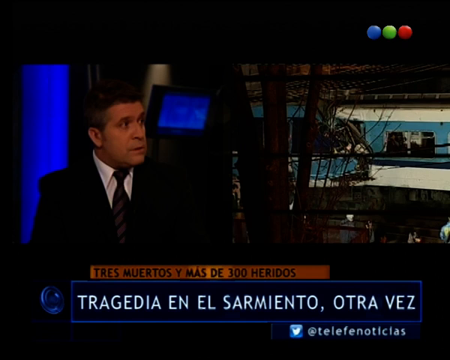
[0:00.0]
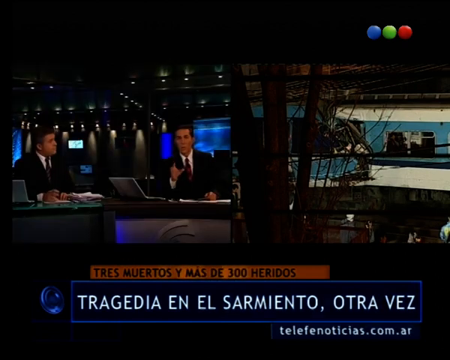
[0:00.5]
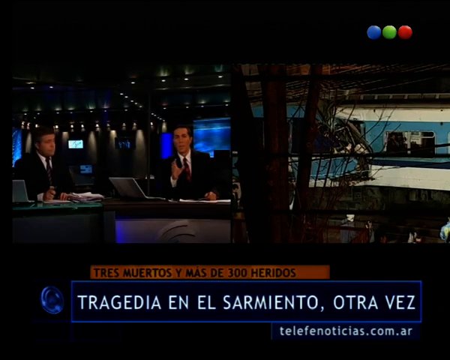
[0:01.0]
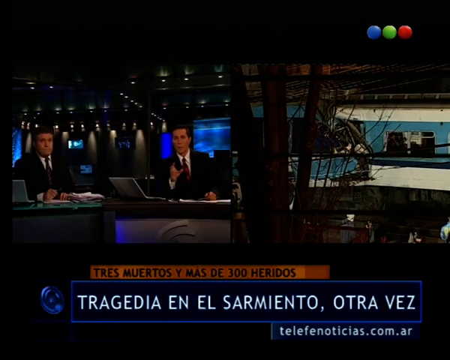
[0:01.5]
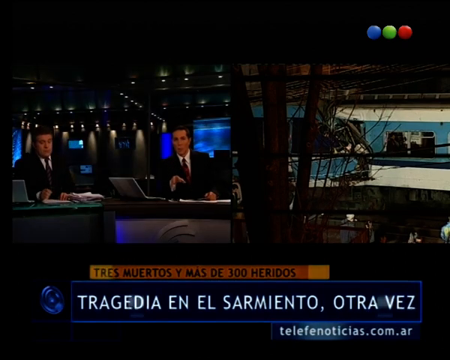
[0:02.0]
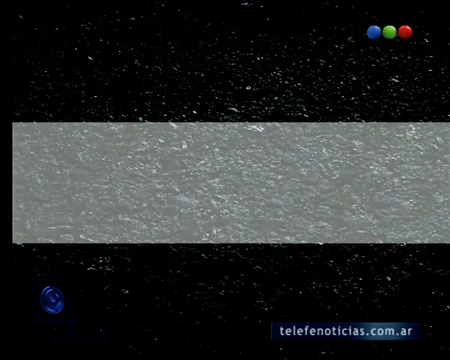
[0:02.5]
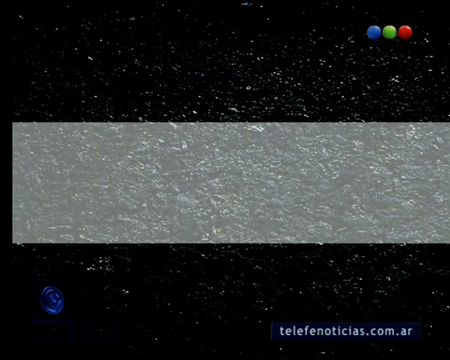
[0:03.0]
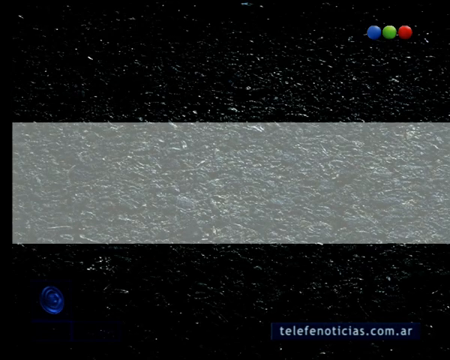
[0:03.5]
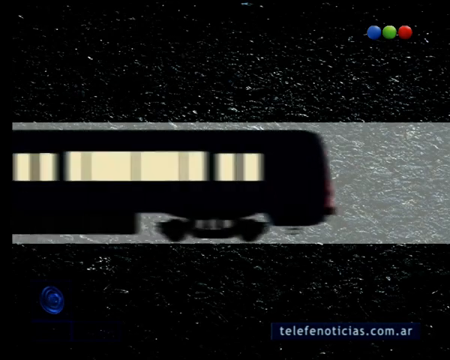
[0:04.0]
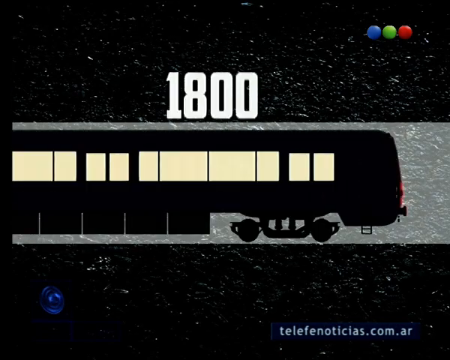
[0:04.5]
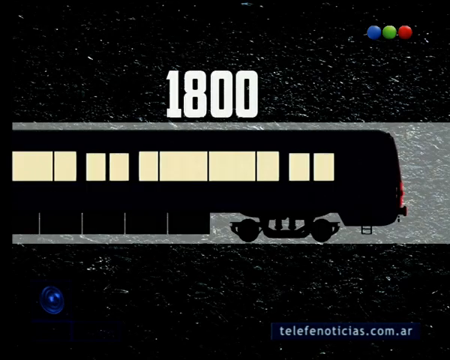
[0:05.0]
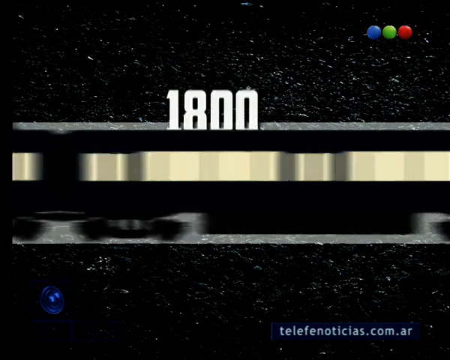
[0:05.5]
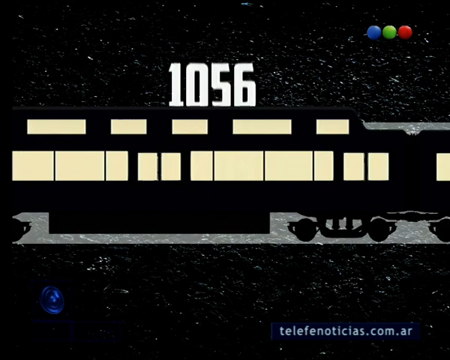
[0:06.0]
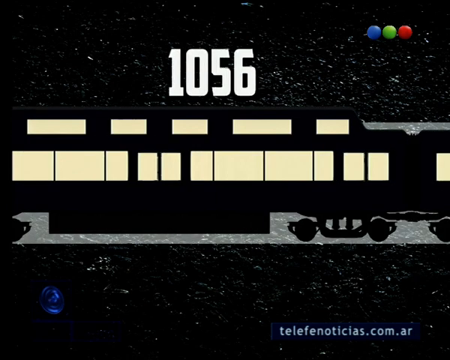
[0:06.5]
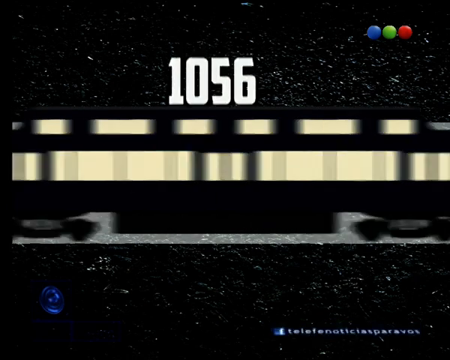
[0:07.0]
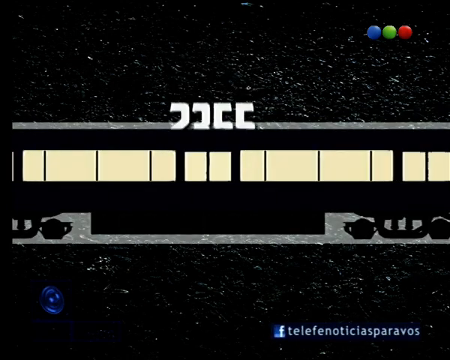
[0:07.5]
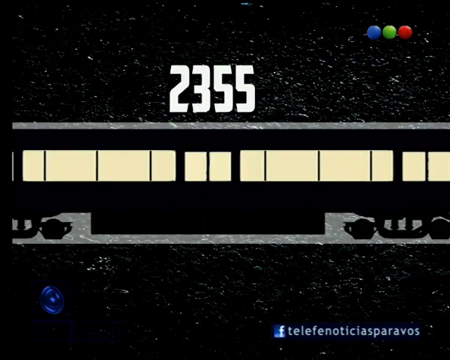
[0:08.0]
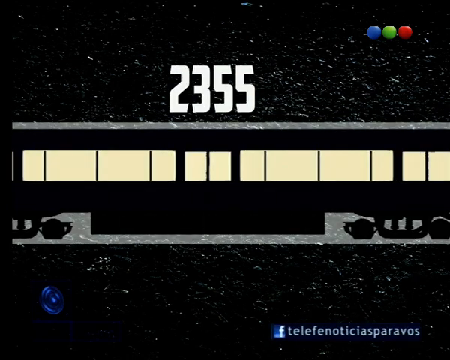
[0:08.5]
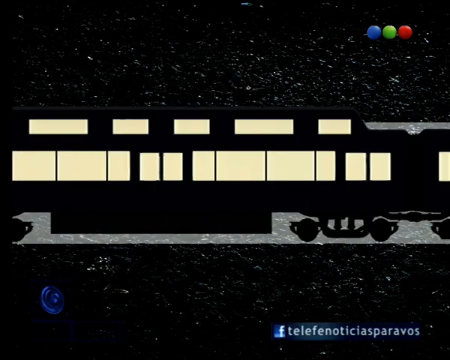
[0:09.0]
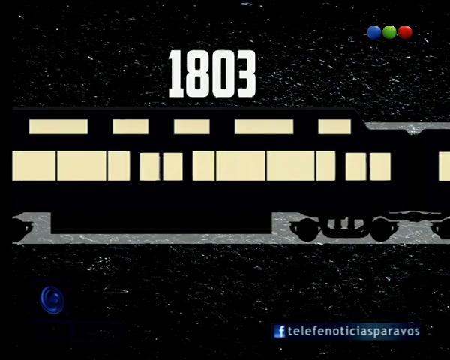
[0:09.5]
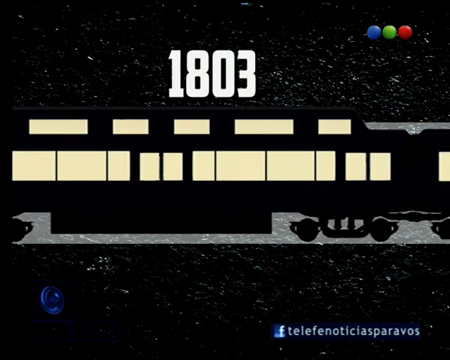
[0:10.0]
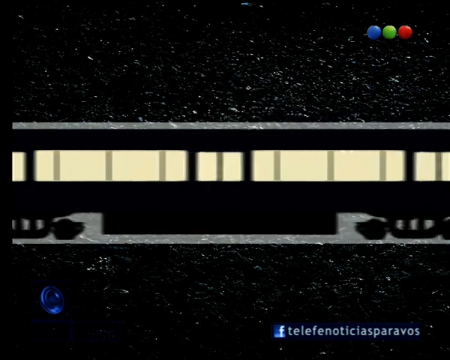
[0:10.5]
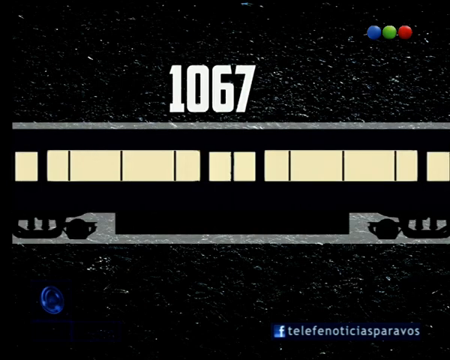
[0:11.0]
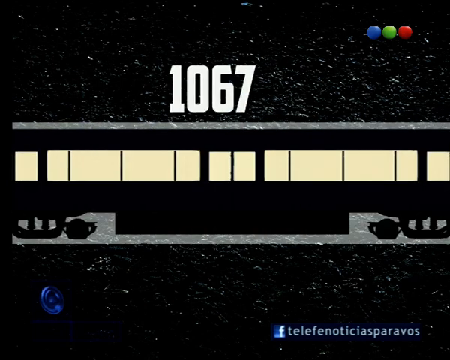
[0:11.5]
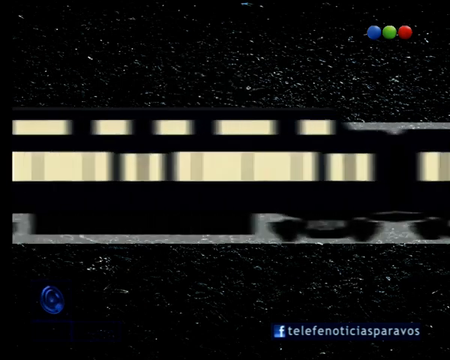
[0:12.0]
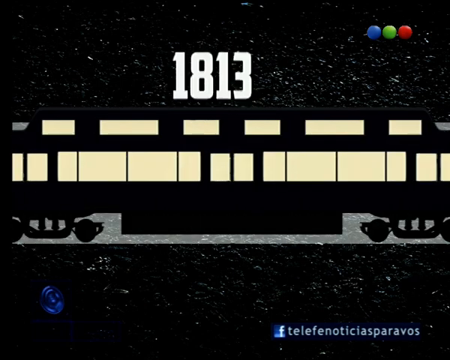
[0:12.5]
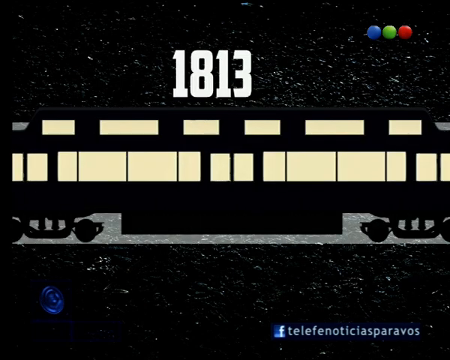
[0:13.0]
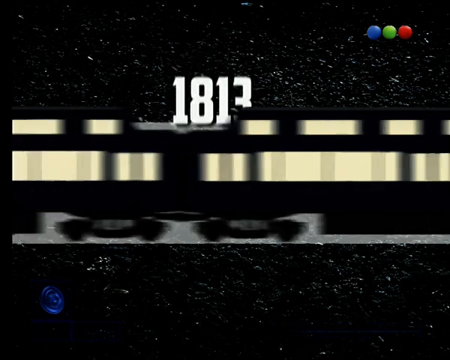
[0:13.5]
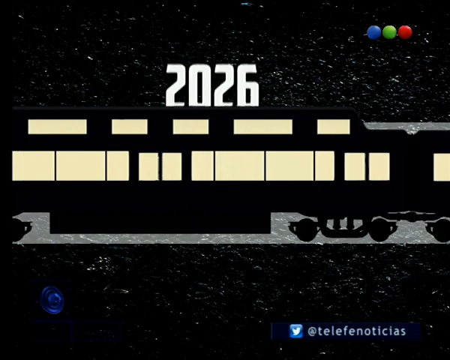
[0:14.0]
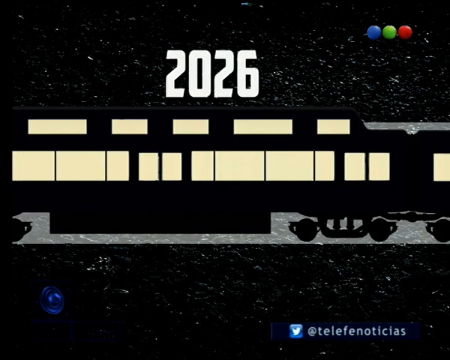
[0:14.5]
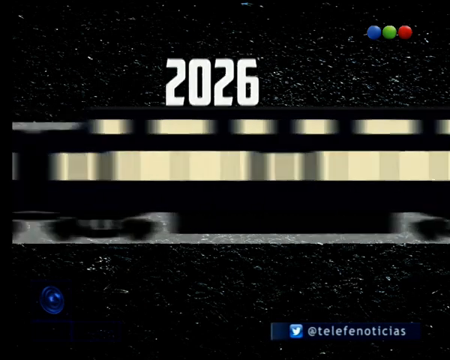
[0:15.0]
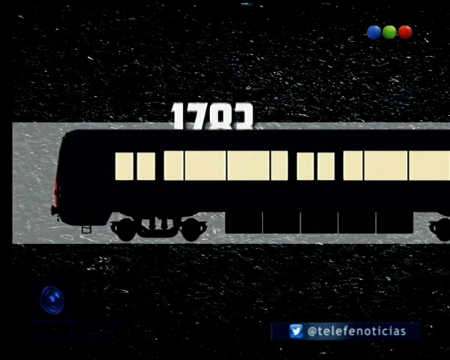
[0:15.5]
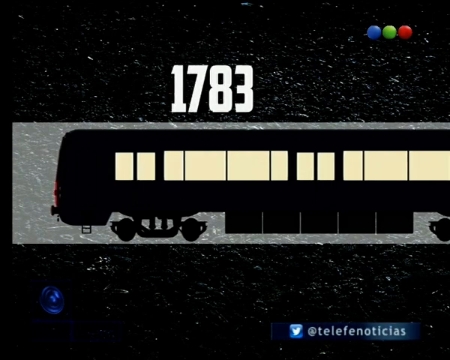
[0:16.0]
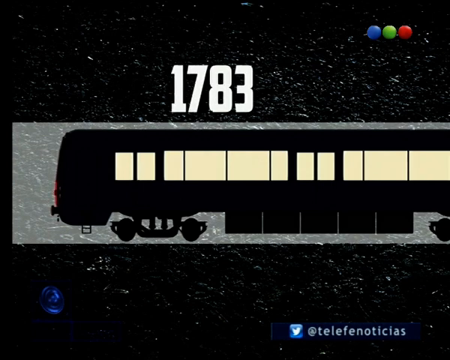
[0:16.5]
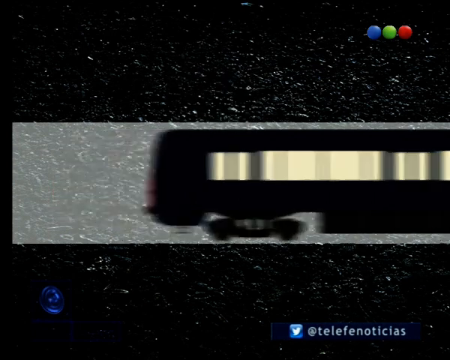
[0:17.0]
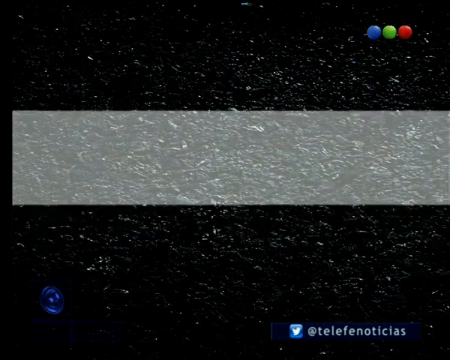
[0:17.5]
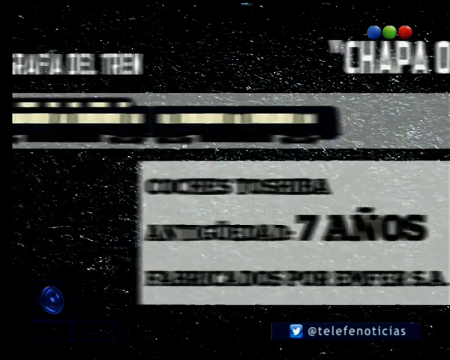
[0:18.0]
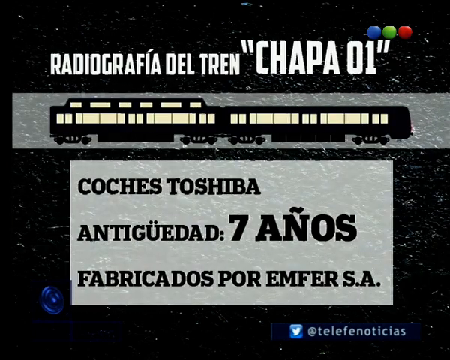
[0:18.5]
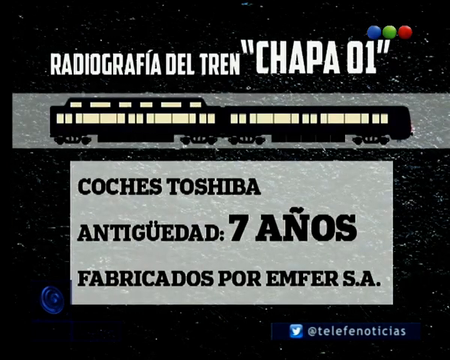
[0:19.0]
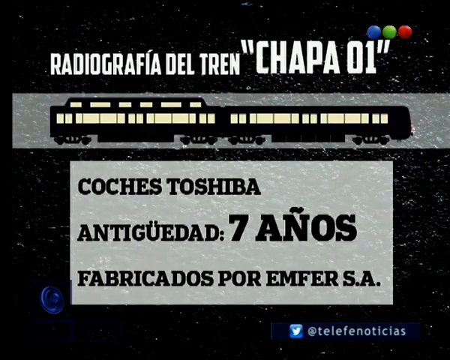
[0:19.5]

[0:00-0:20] Headings appear at the bottom of the screen in a foreign language. The first words, written in orange, translate to "three dead and more than 300 injured." Text on blue, in the same language, translates to "tragedy on the samiento again." It seems to be a news report about a tragic incident, apparently a train accident on the Samiento railway line.